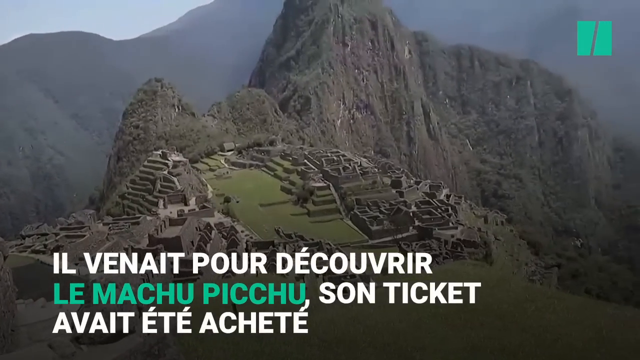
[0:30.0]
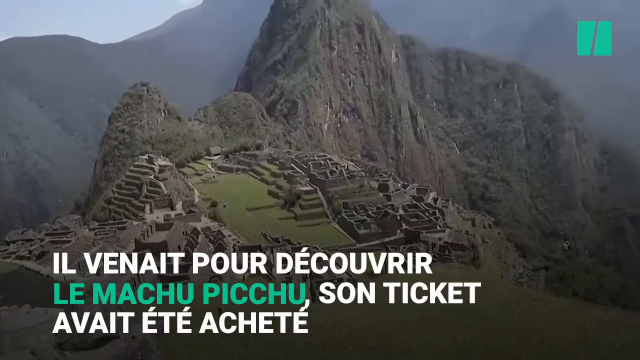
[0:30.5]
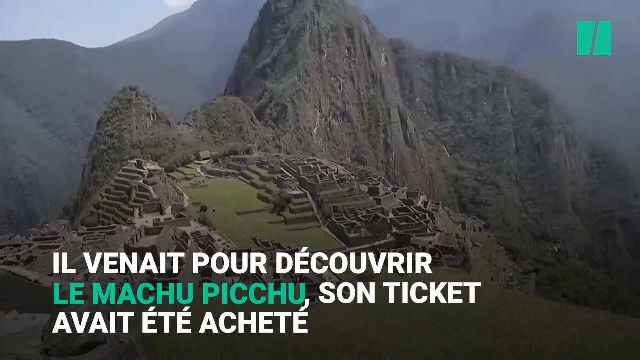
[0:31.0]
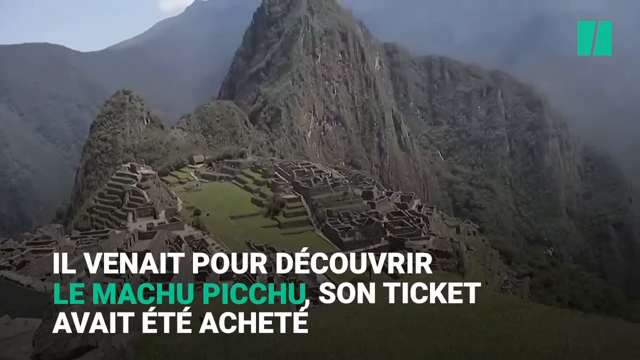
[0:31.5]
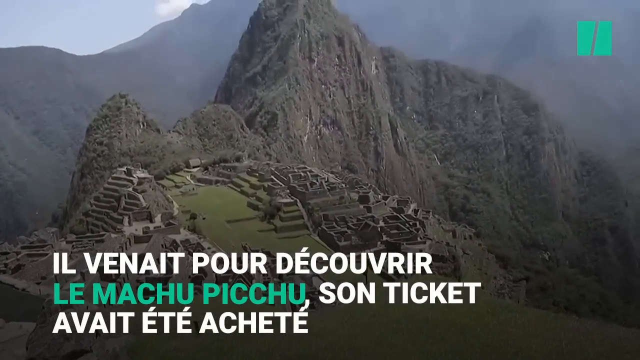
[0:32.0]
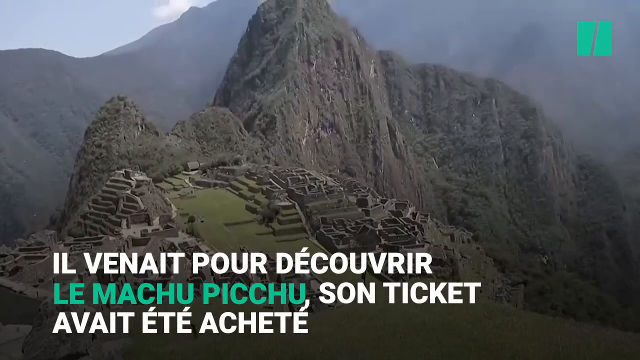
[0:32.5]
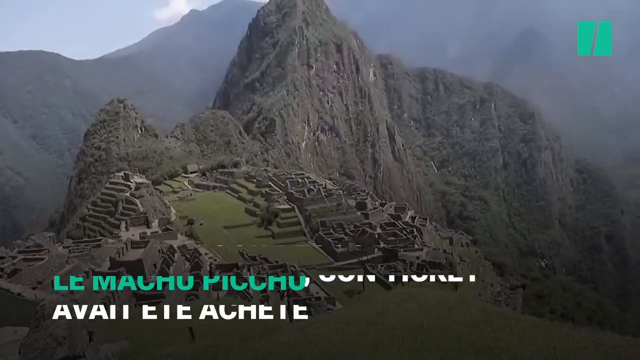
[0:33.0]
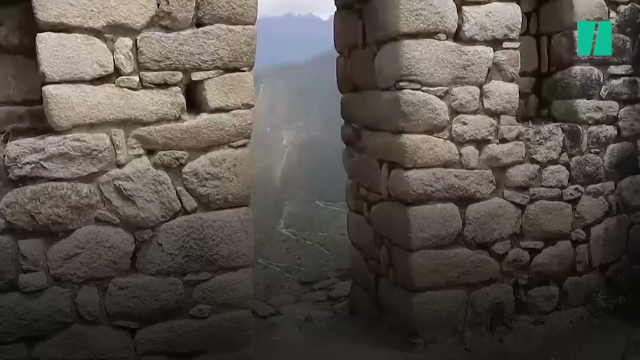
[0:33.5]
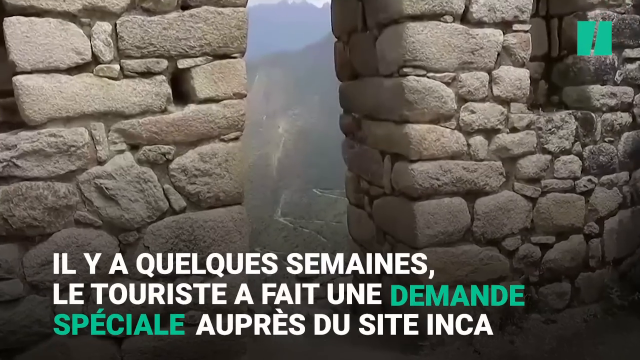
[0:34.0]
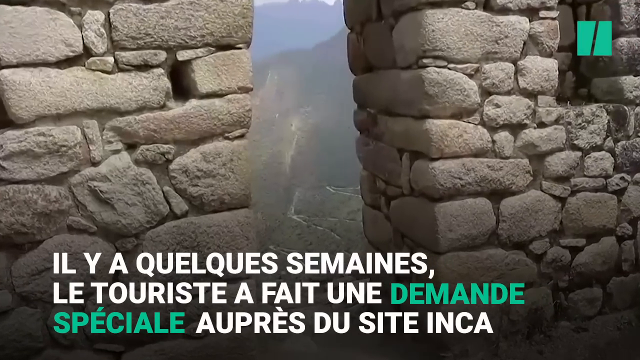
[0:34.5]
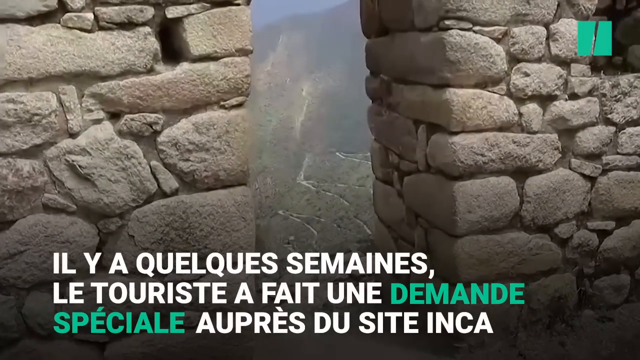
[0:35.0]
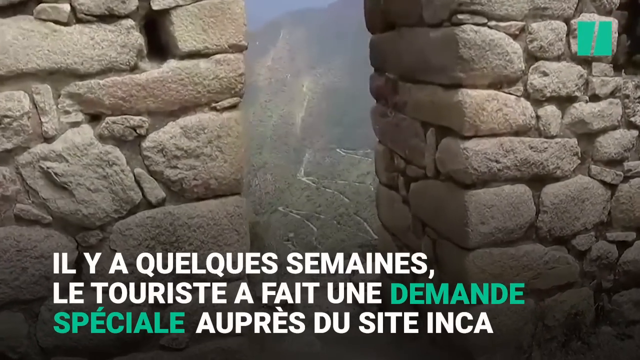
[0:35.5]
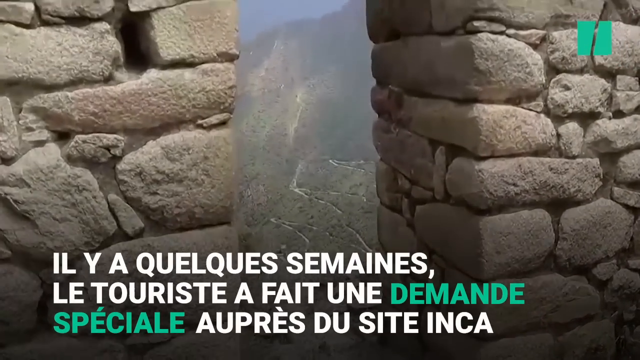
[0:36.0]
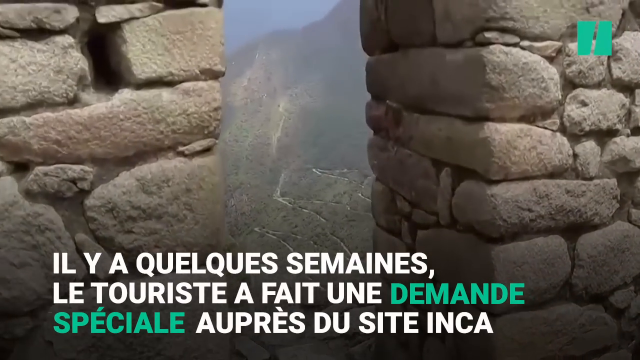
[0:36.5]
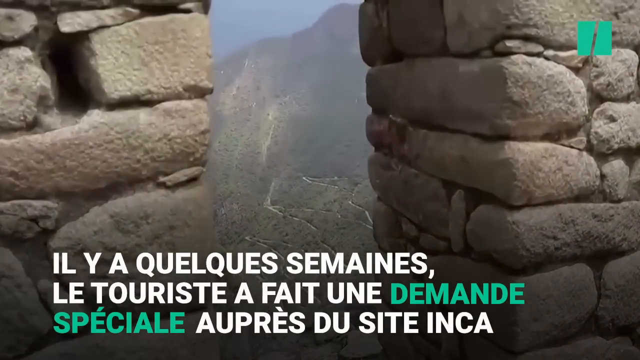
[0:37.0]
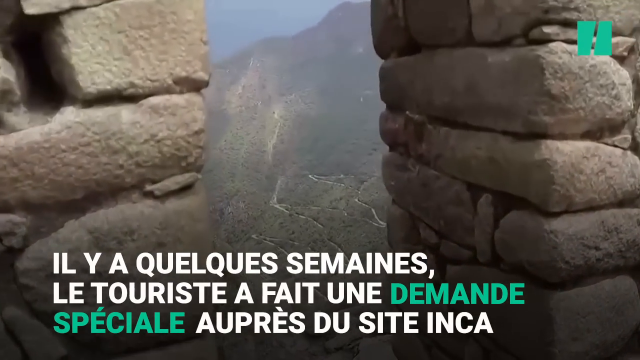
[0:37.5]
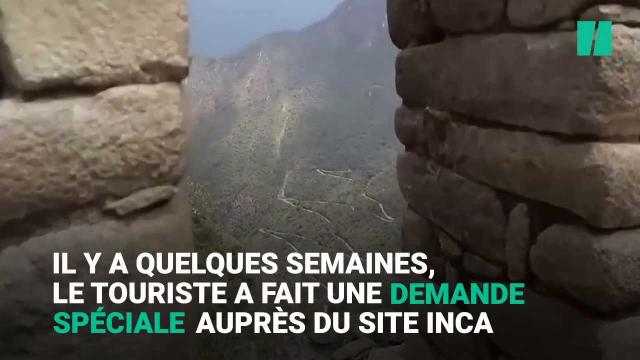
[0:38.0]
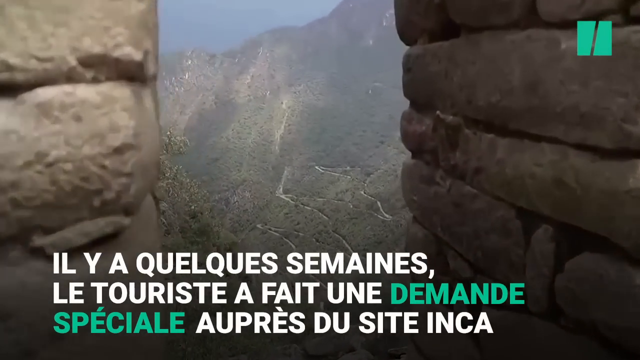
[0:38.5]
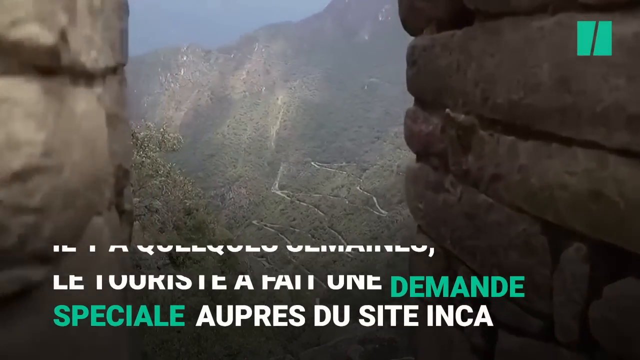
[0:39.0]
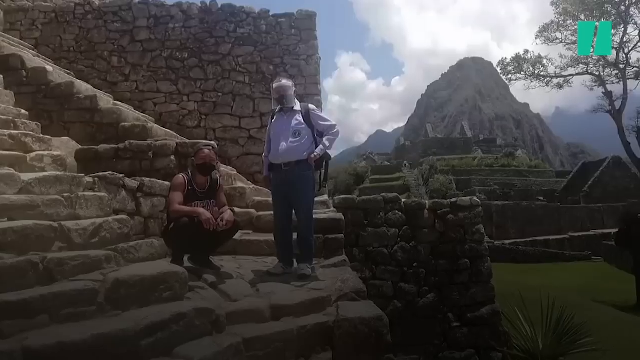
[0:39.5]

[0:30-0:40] A picture shows a walkway with a hole in the wall. Through the hole it is visible how high up the area is, with a river or an area for water to pass through below, possibly a cropping area. The man walks up to this window-like opening and shows what is underneath. Some houses are on the left side, and the rest is mostly trees and mostly empty area.